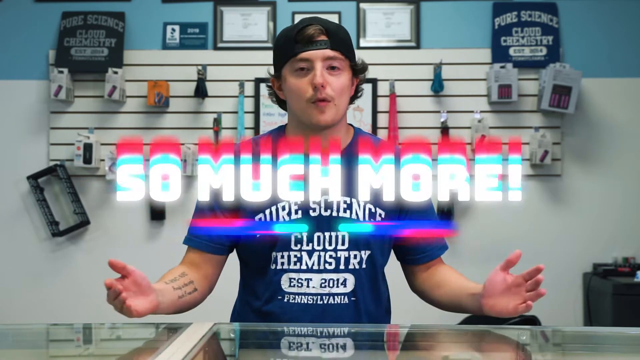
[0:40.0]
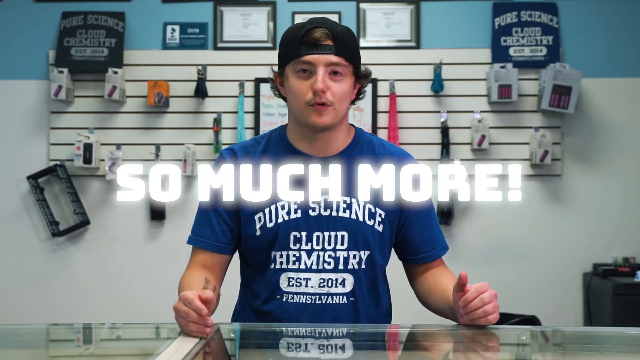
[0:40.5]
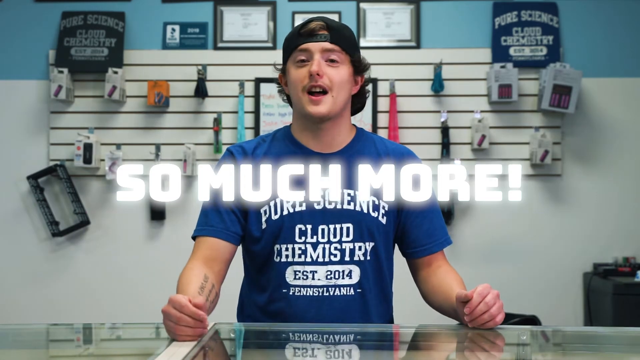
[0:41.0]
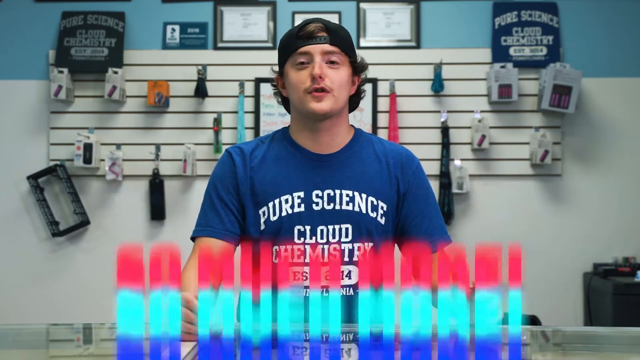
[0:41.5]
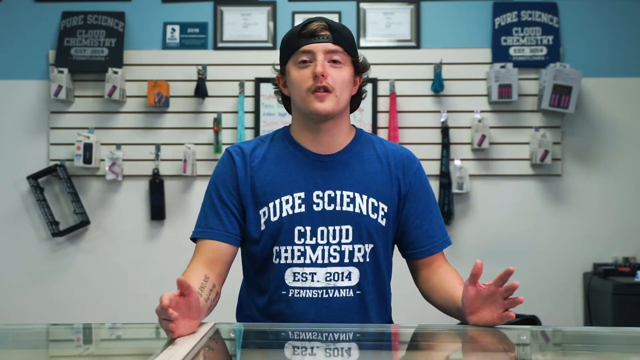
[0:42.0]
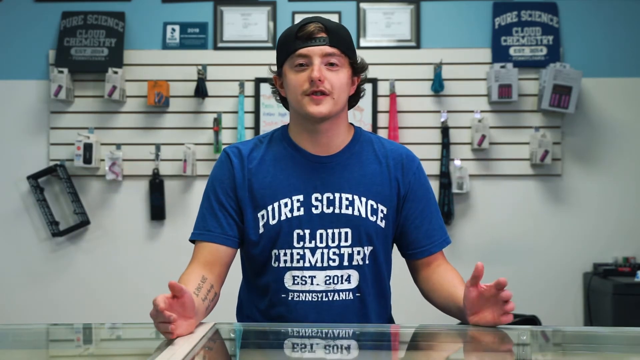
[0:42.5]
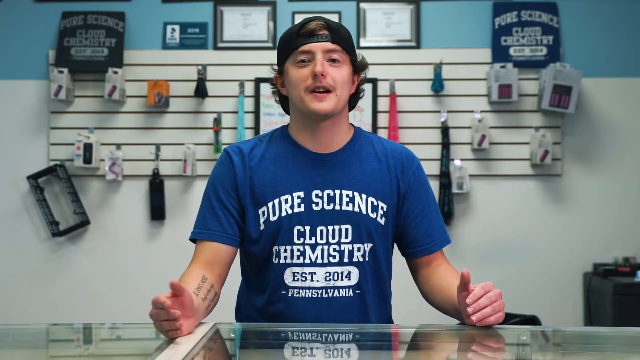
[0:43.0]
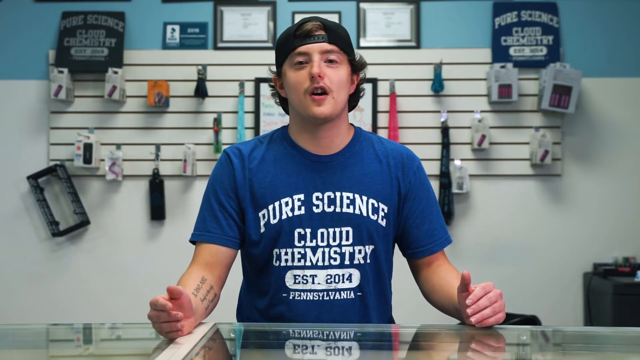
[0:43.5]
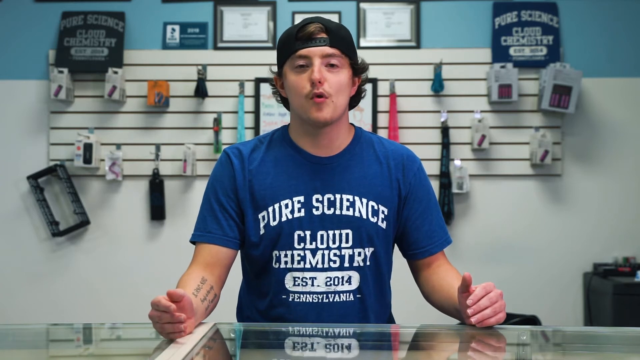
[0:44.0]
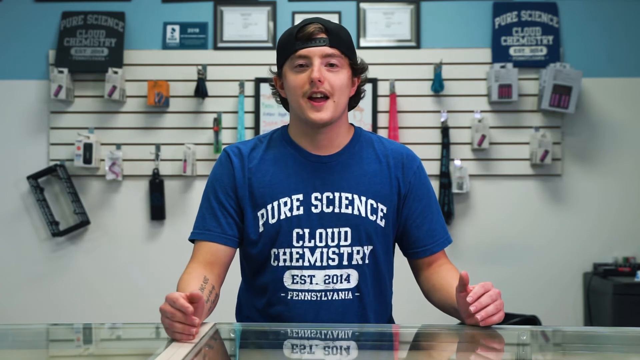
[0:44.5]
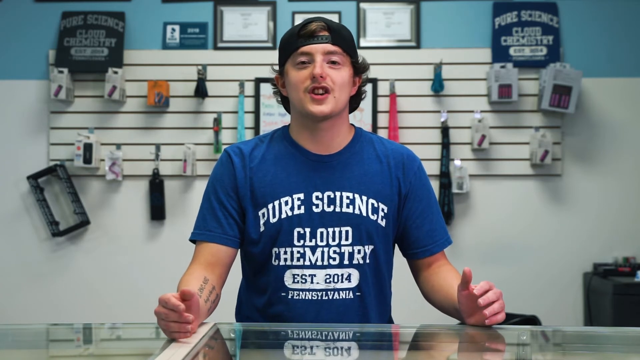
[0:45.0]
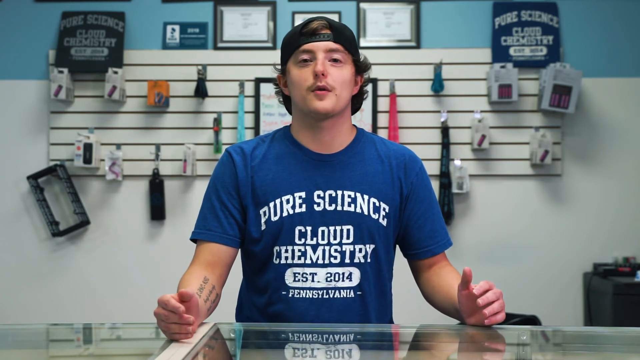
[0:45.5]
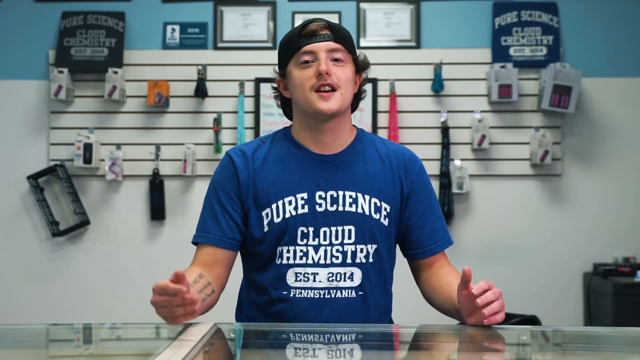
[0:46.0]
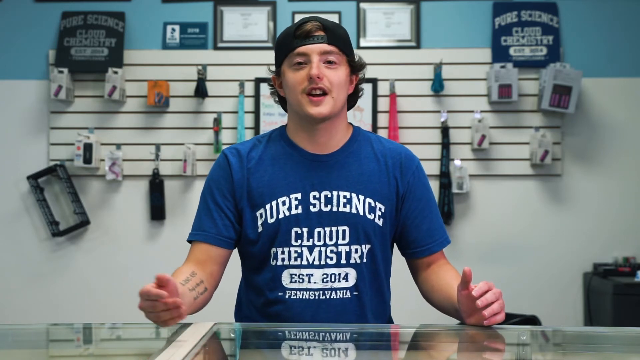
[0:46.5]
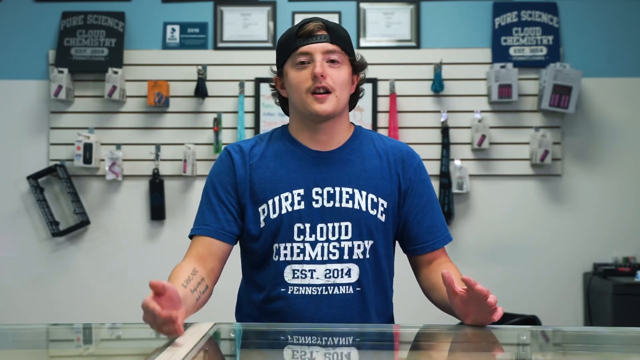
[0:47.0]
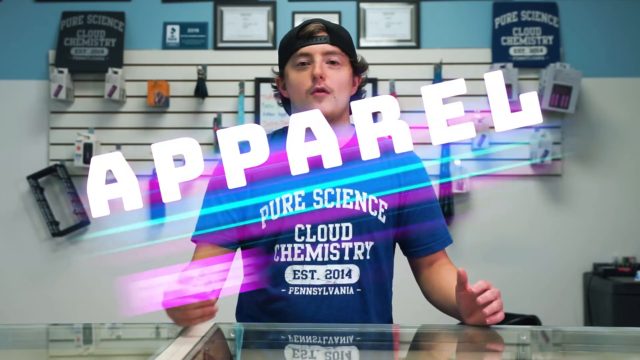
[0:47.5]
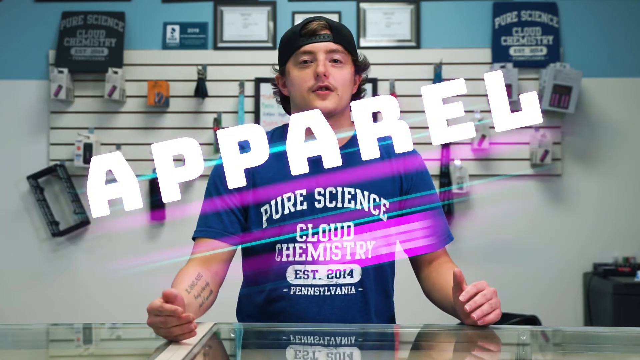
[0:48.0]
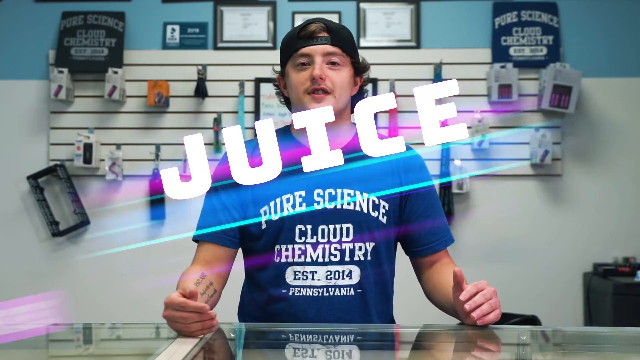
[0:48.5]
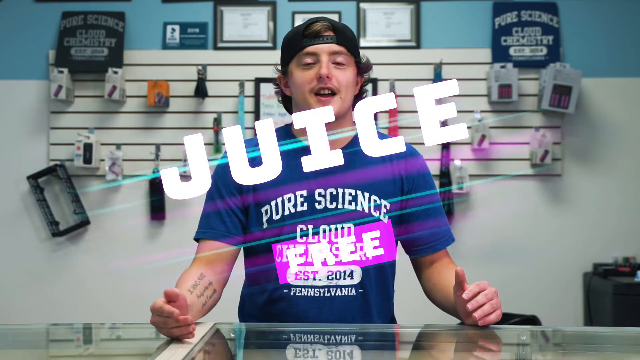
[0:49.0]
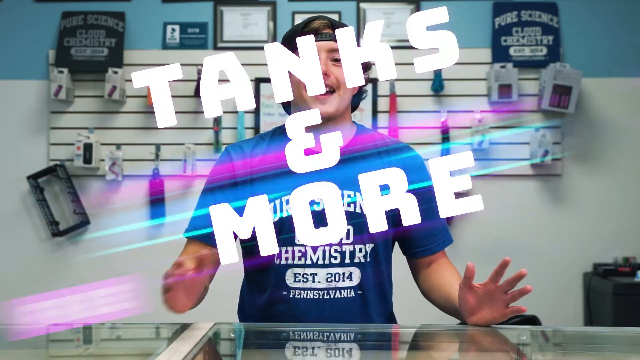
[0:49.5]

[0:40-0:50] The video returns to Taylor in his blue t-shirt with the words "pure science cloud chemistry established 2014 Pennsylvania" and his black hat on backwards. He is standing at his counter in front of a white wall with a little blue toward the top and many items, possibly tools, hanging off pegs behind him. His hands are still gesturing a lot as he talks. More words flash on the screen in white capital letters: "apparel," "juice," "tanks," and "and more, so much more." As the section ends, his hands are out to each side of his body, palms facing inward, upright on the counter.